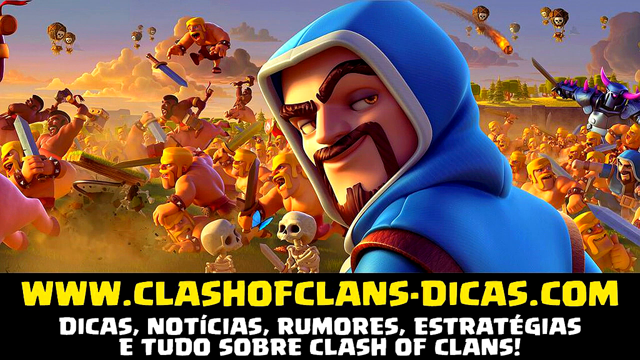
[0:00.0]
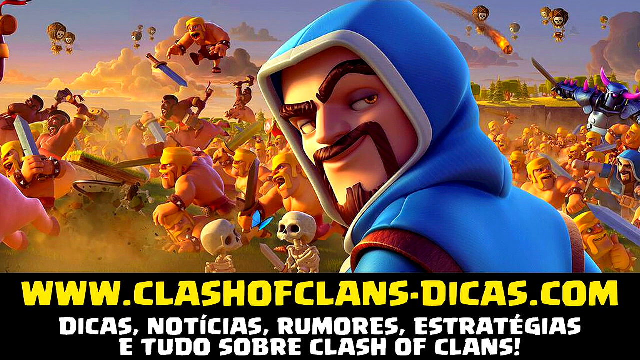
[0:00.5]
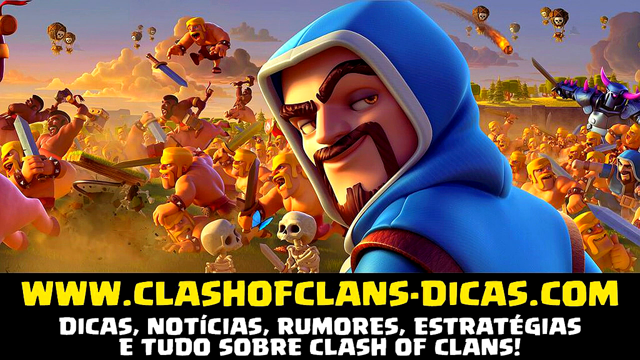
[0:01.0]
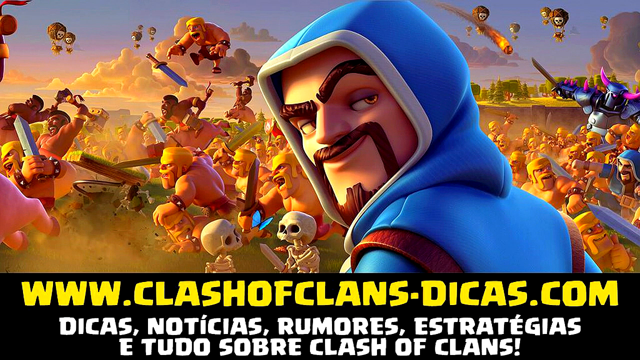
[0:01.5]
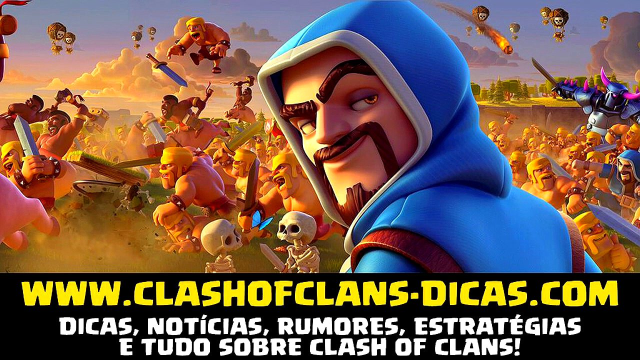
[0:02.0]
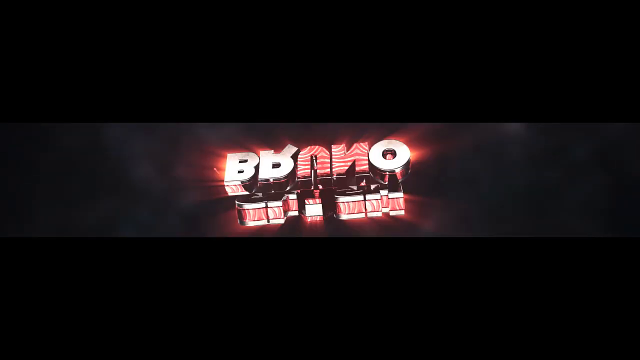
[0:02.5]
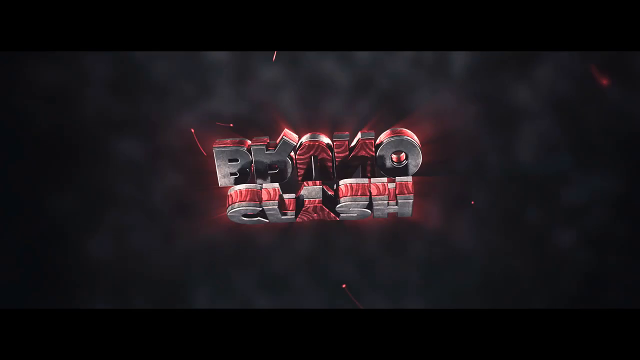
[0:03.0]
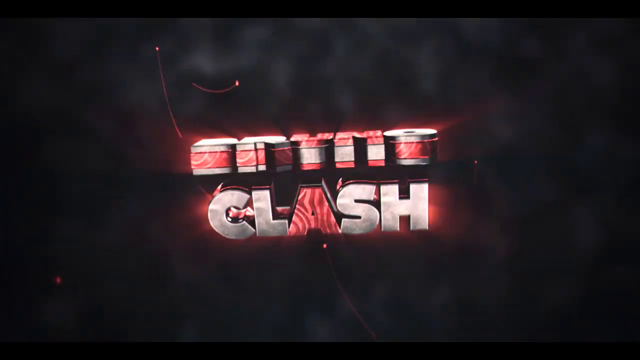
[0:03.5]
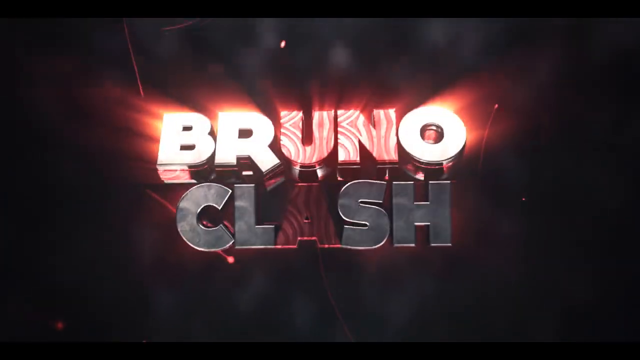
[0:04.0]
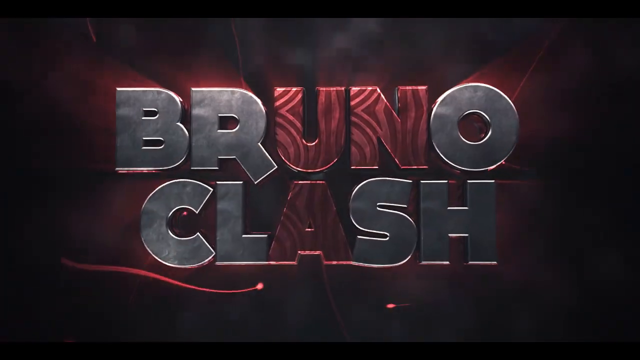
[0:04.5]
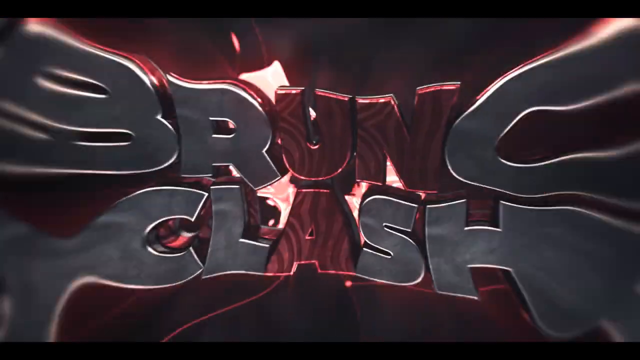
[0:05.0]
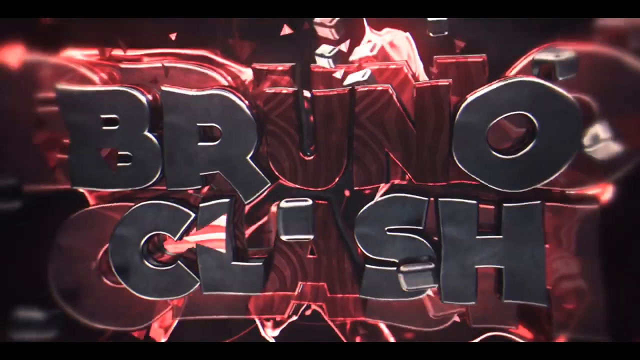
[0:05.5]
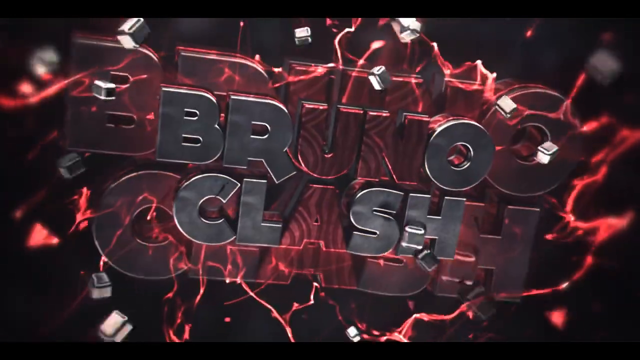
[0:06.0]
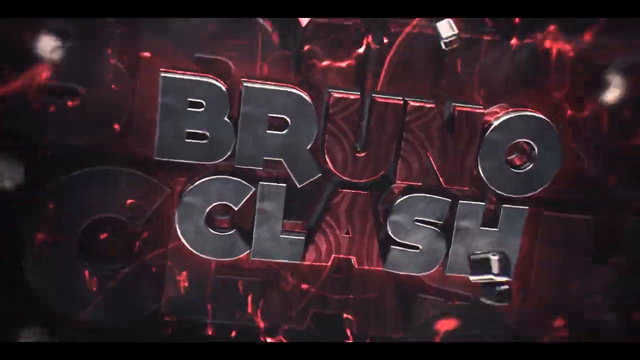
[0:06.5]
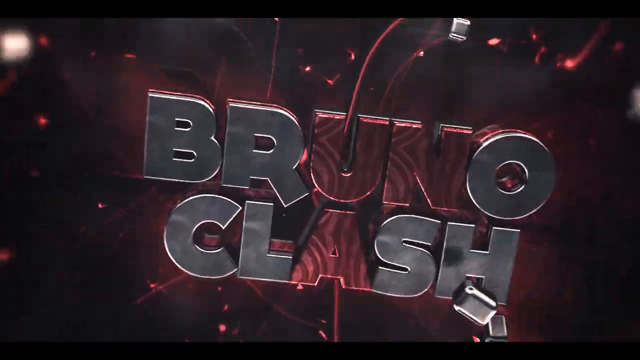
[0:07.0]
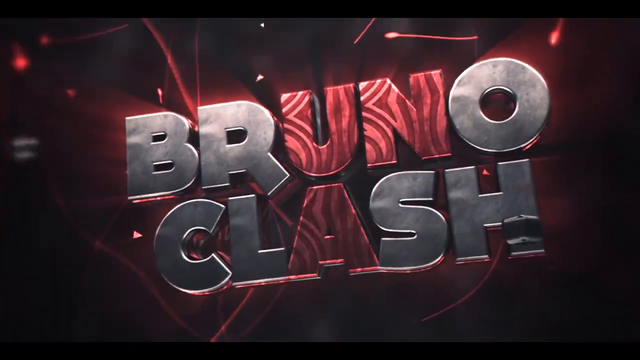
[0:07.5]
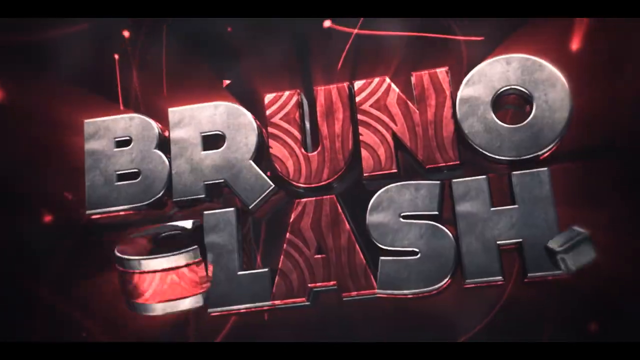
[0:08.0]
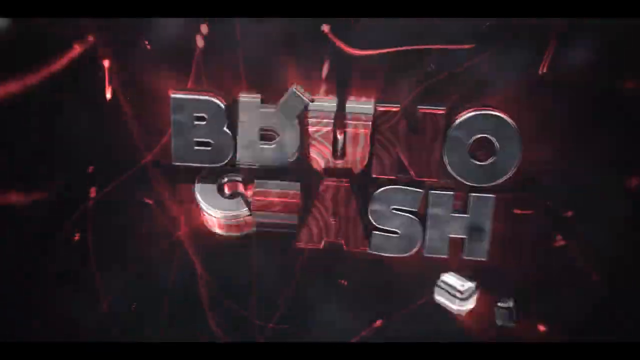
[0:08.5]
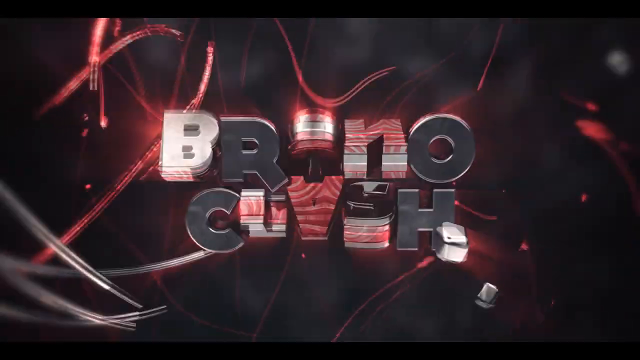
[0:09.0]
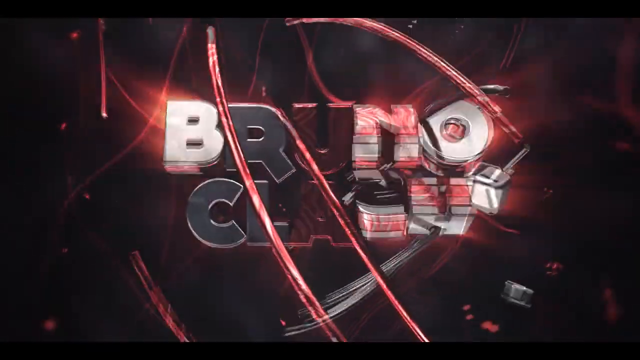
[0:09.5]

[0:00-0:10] The first screen shows an animated man with a goatee in a 3D, cartoonish style, with the text "www.clashofclans.com" at the bottom. A lot is going on in the background: what looks like a war or battle between people in almost medieval times, with skeletons, things flying, and a guy jumping through the air with a sword. The next screen is a 3D animated logo that says "Bruno Clash".